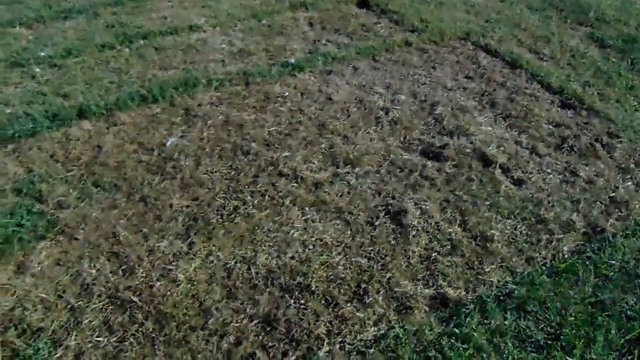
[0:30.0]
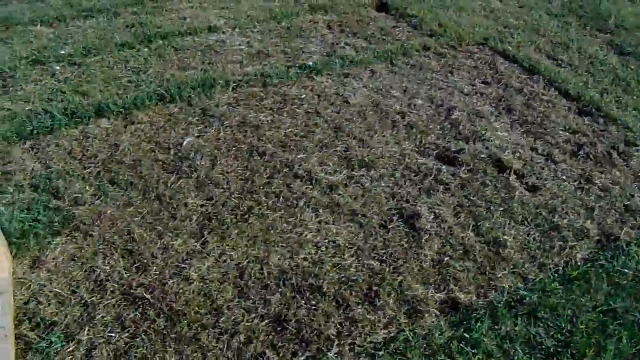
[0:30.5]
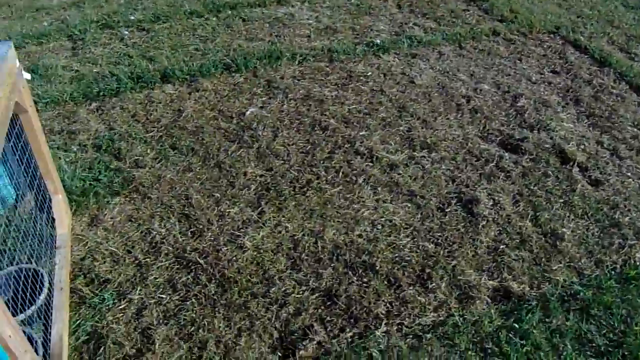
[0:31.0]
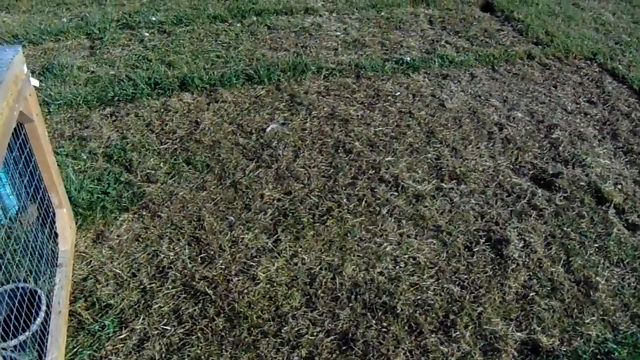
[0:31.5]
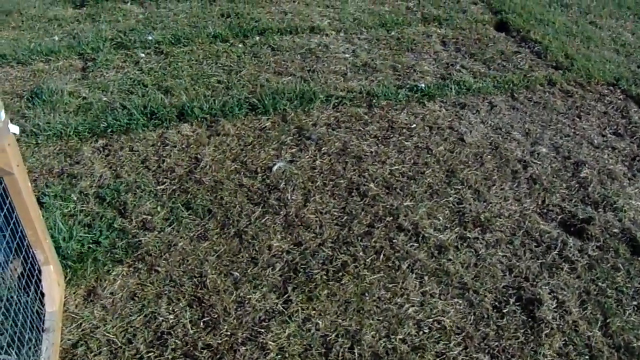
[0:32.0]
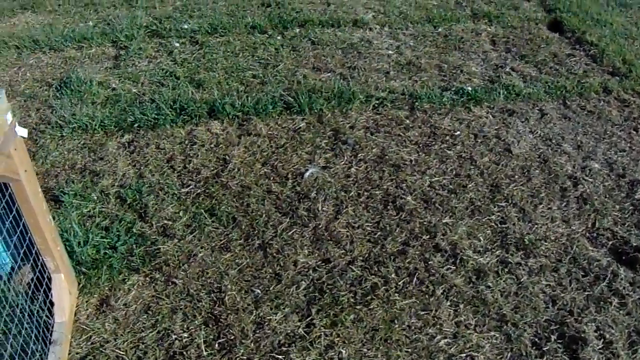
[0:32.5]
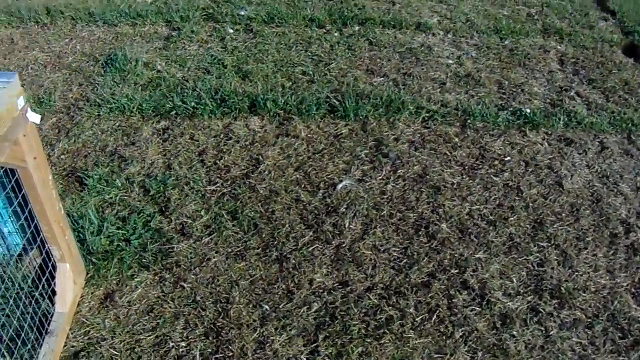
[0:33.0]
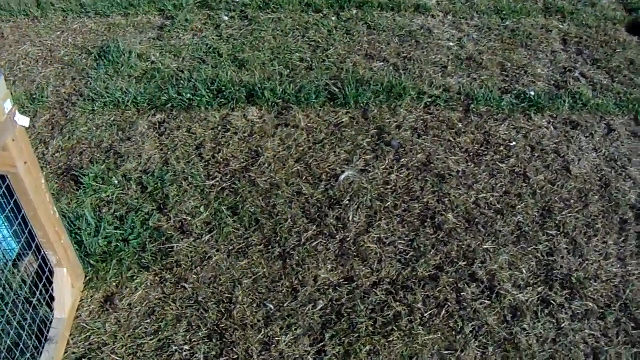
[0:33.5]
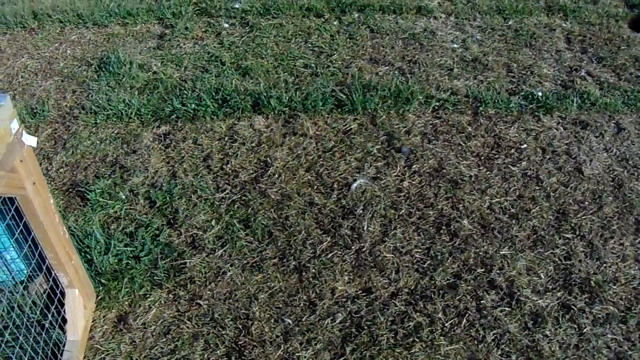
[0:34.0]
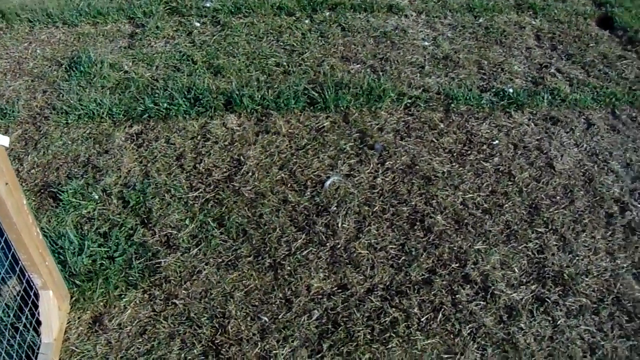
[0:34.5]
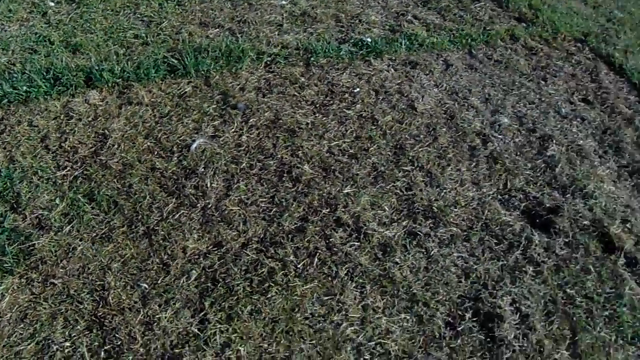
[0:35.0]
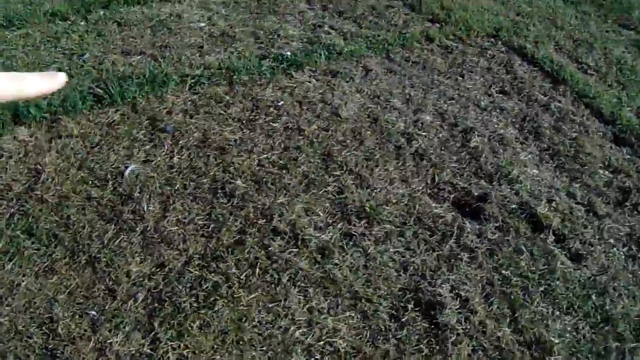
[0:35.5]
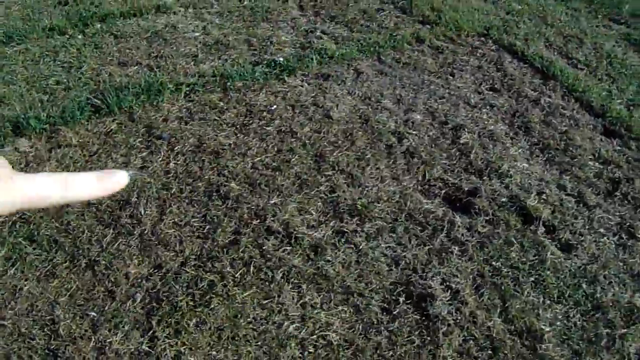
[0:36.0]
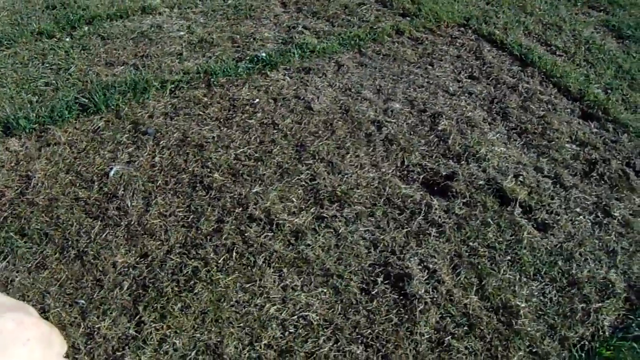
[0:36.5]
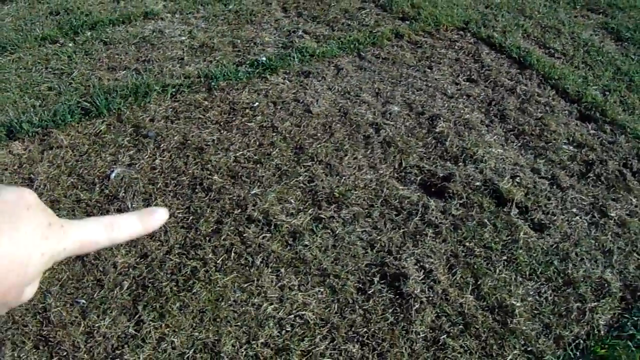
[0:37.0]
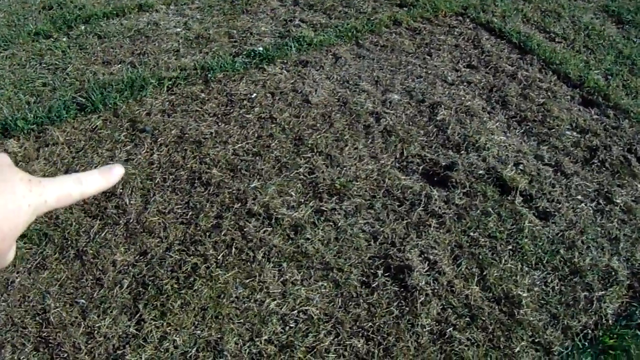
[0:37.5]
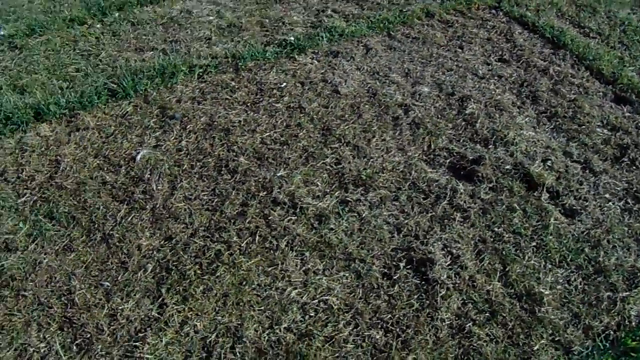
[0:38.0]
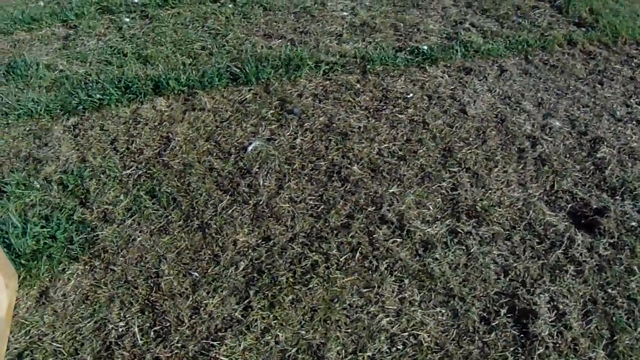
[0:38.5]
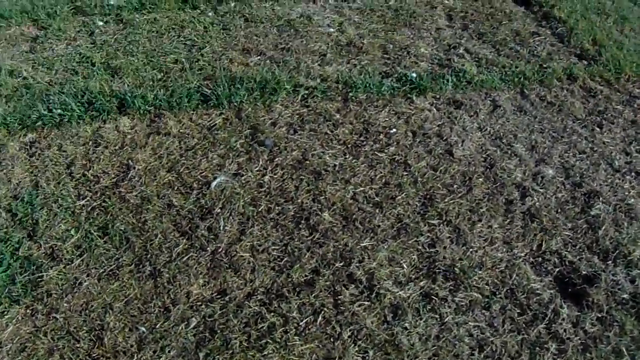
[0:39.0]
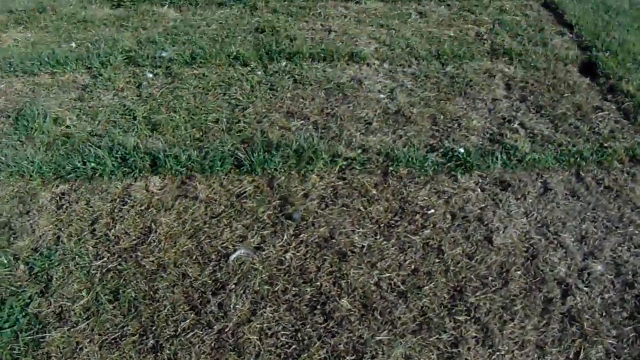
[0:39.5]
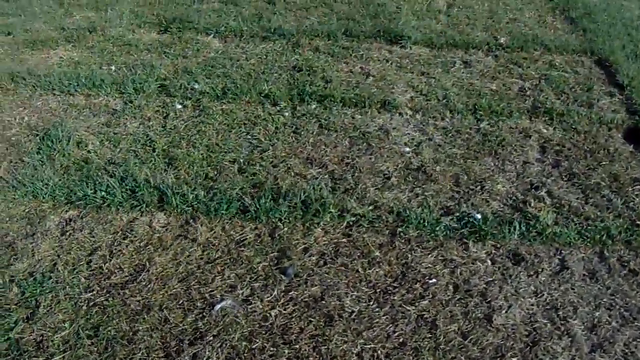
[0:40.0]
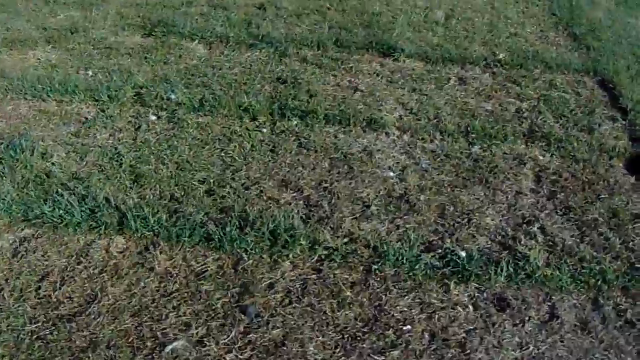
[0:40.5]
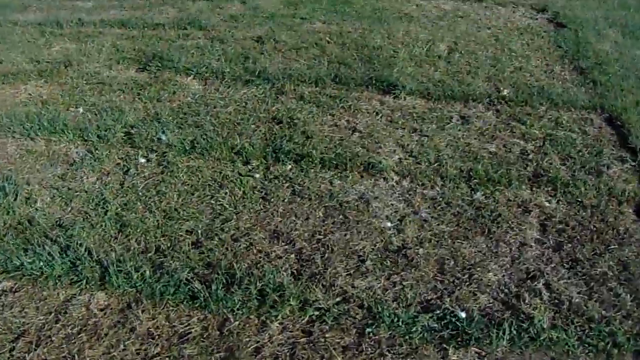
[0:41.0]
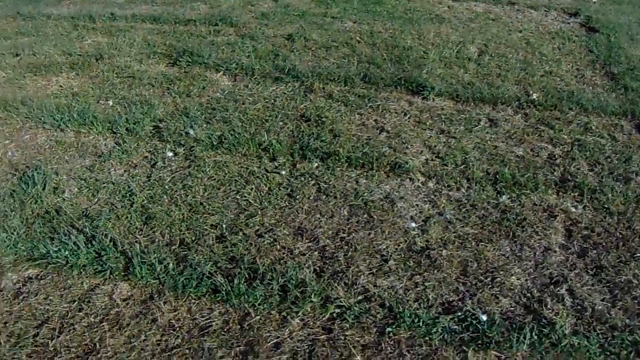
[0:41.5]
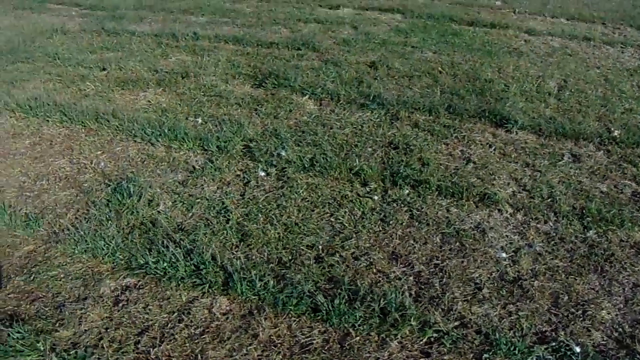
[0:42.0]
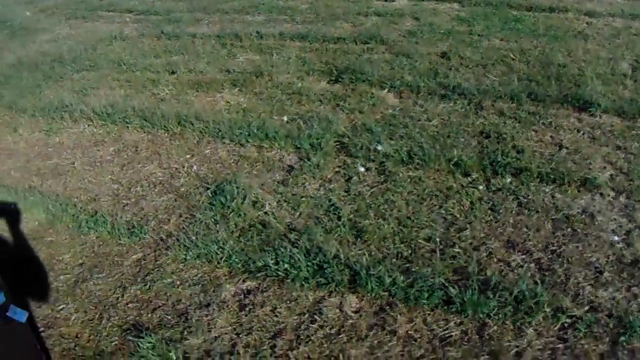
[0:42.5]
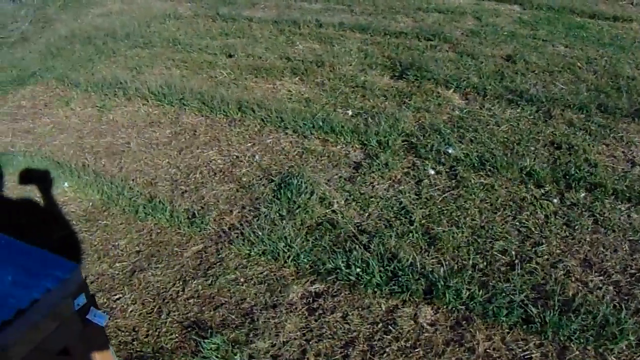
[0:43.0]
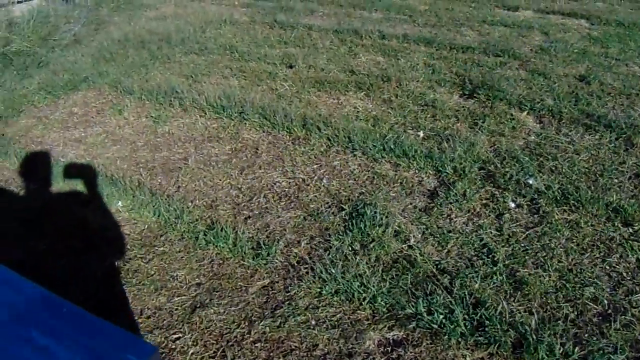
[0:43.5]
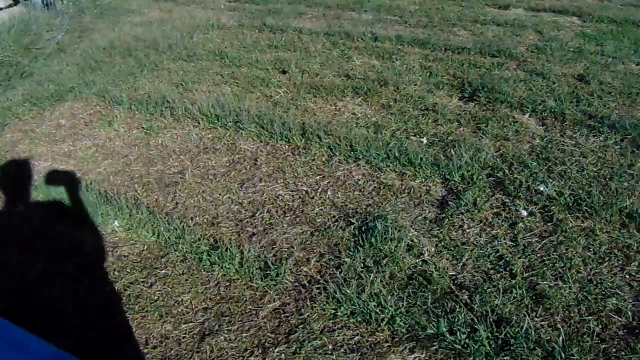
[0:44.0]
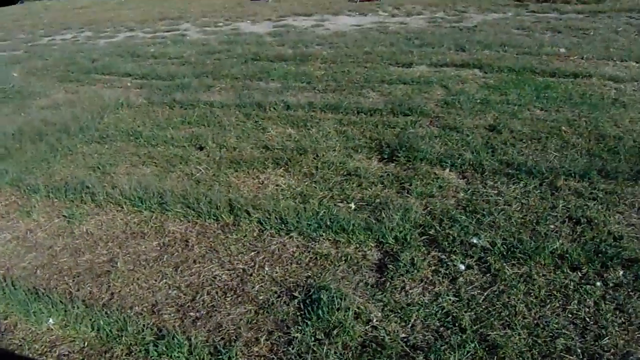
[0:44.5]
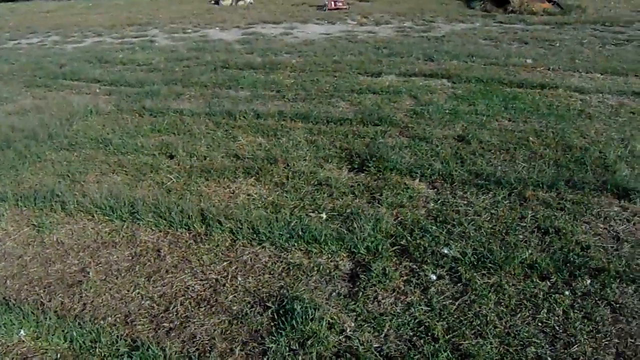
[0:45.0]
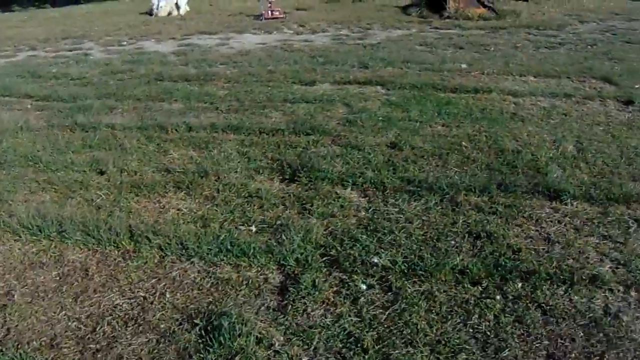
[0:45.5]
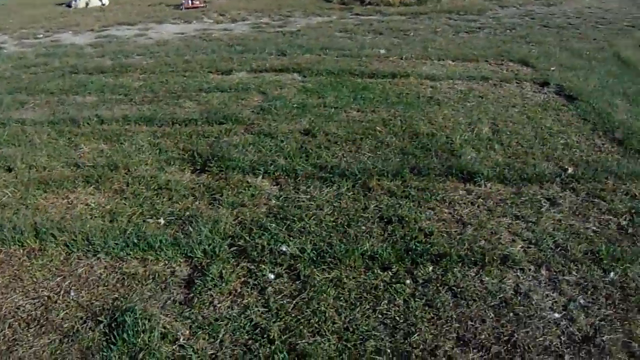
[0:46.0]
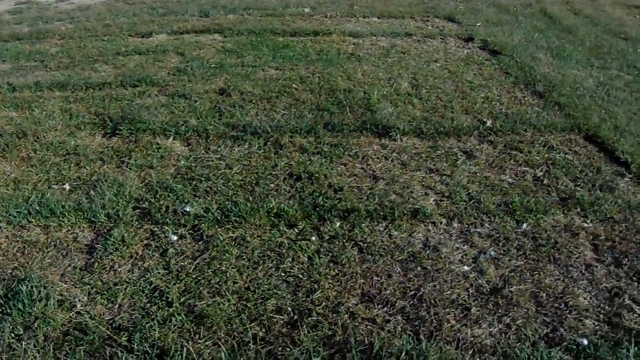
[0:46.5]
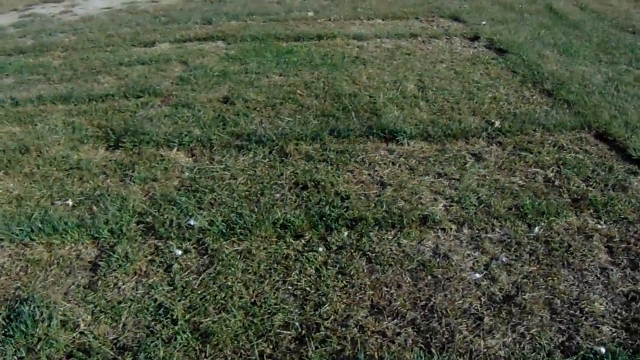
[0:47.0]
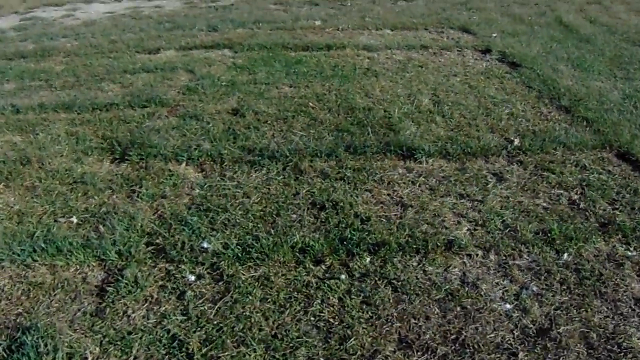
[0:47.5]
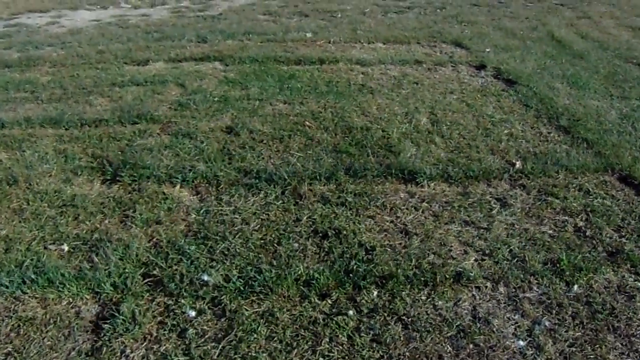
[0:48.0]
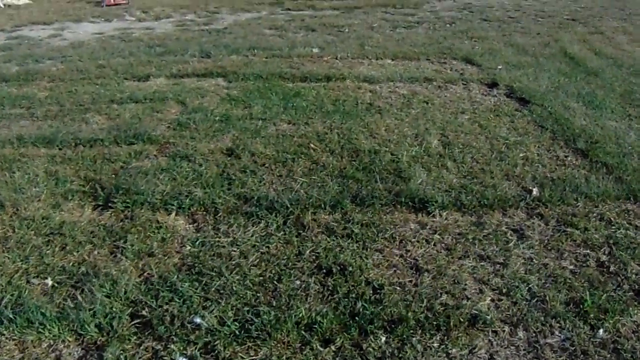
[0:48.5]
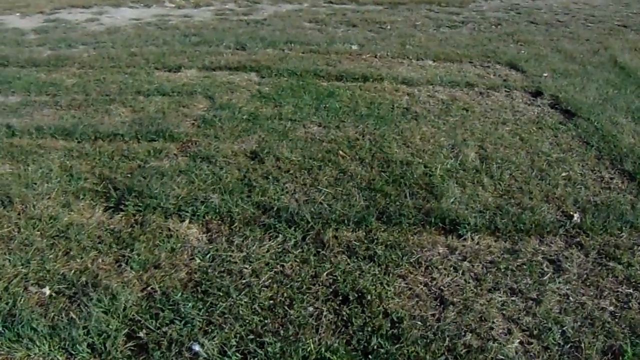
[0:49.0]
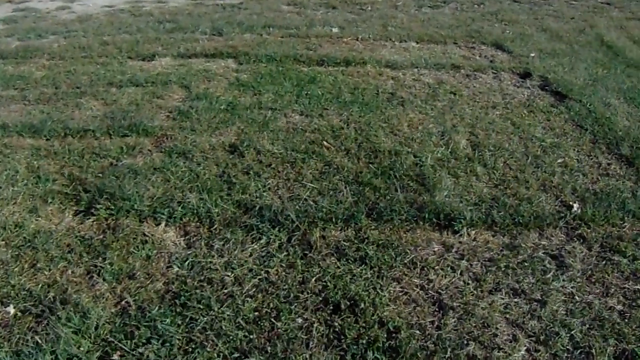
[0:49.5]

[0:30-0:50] The shot shows green and brown ground. The camera moves and oscillates, and a person's hand appears from the left edge of the frame, briefly pointing at precise spots. In the lower left corner, the shadow of the person filming is visible; the person seems to hold a rather small rectangular object, suggesting the video is apparently filmed with a cell phone. The footage is not stable at all. On the ground, grass is arranged in a regular way, almost forming rectangles all around the cage. In the first seconds, a portion of the cage is briefly visible in the lower left corner of the frame.